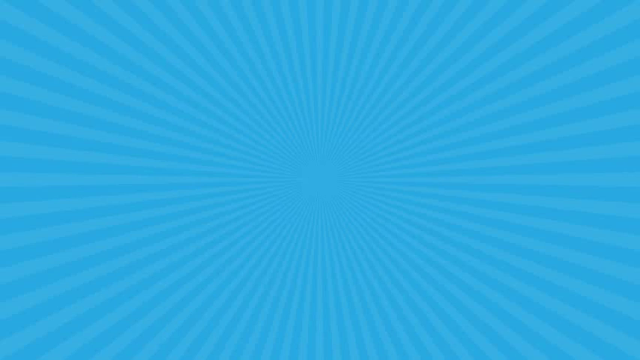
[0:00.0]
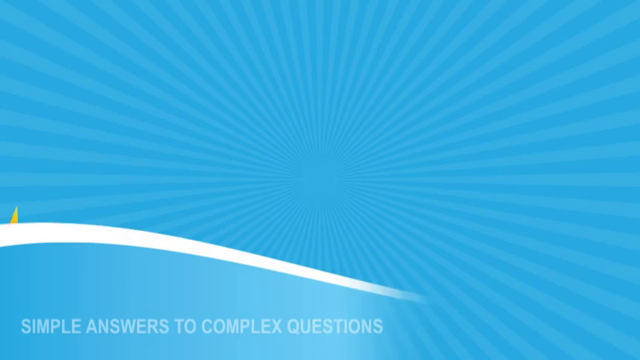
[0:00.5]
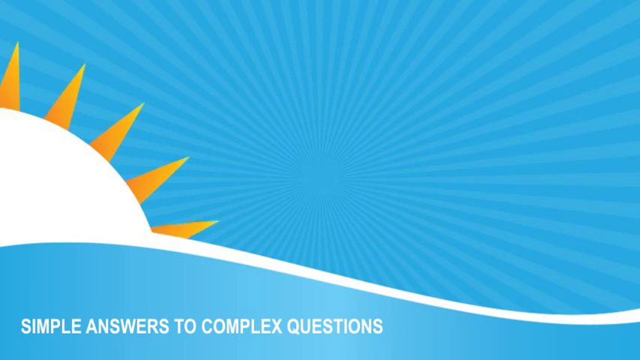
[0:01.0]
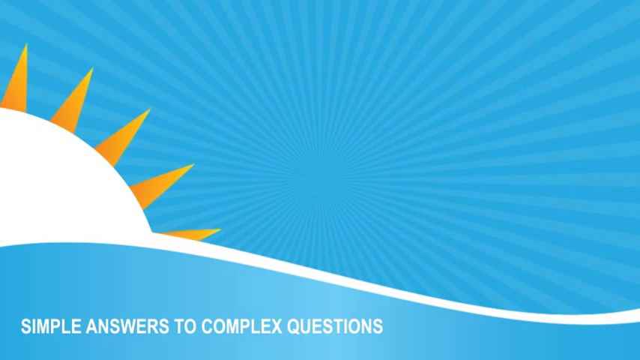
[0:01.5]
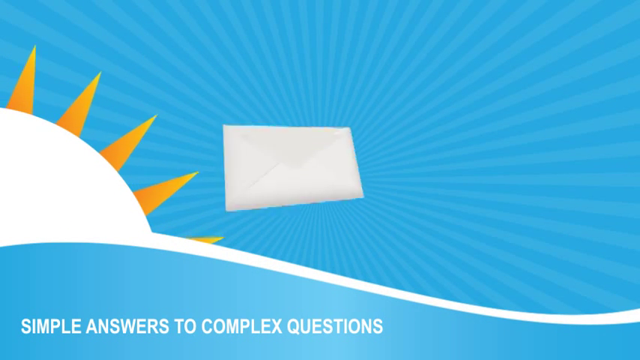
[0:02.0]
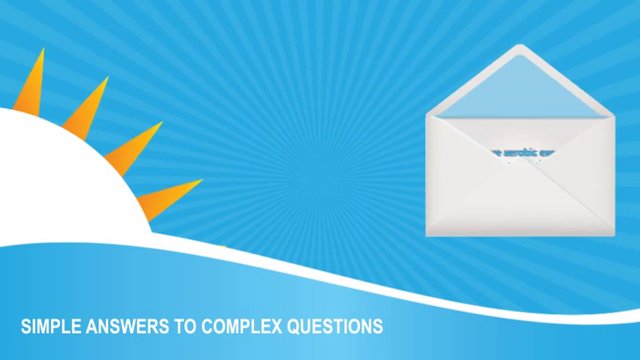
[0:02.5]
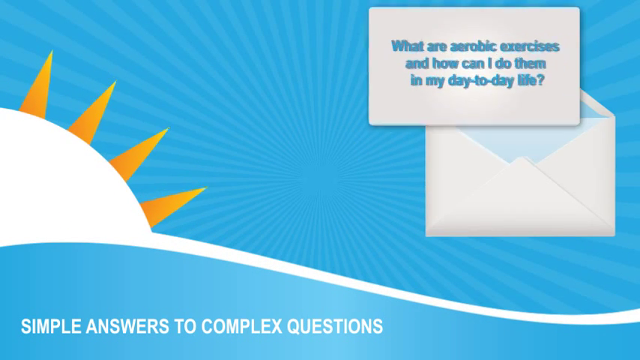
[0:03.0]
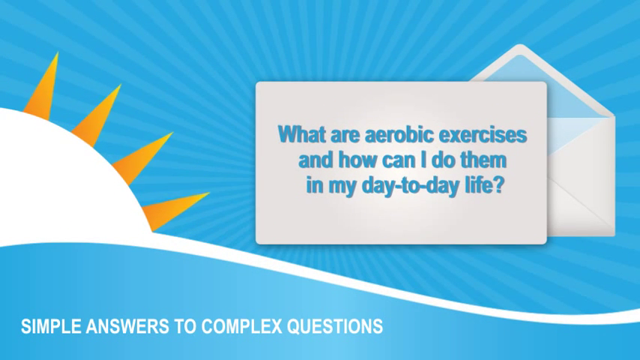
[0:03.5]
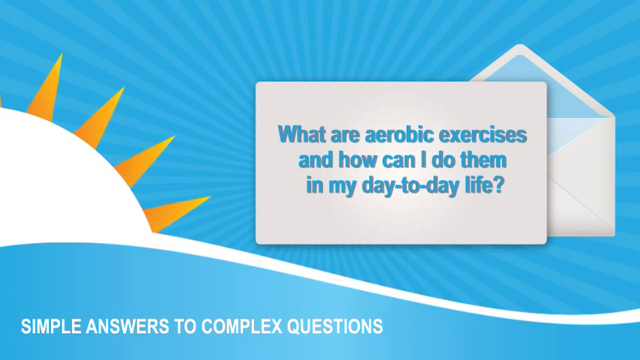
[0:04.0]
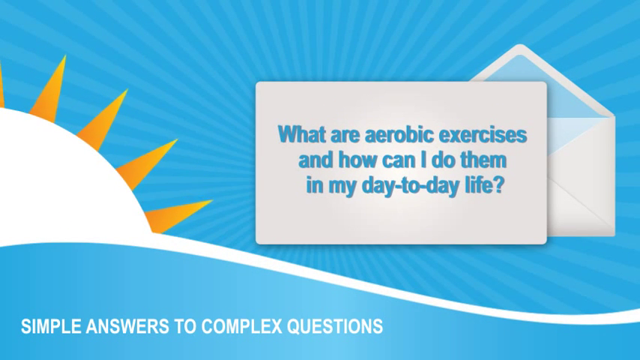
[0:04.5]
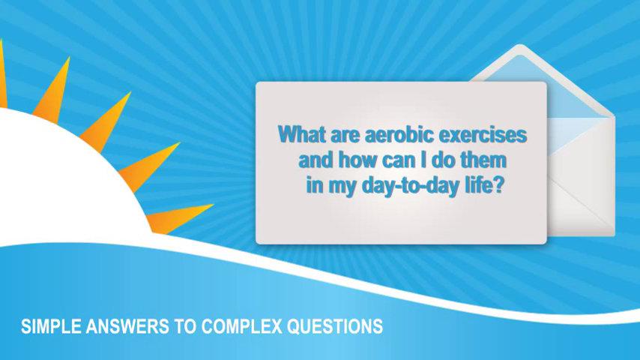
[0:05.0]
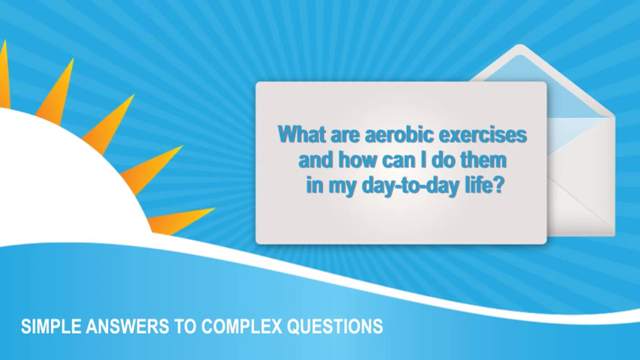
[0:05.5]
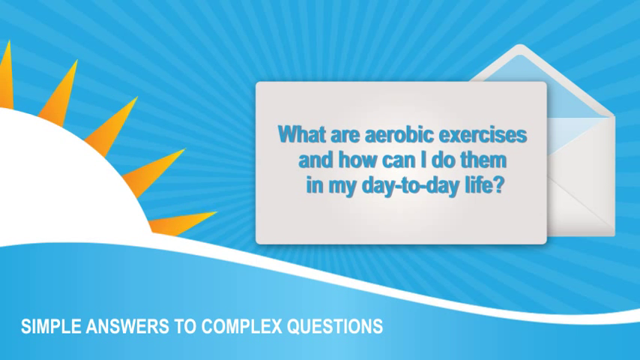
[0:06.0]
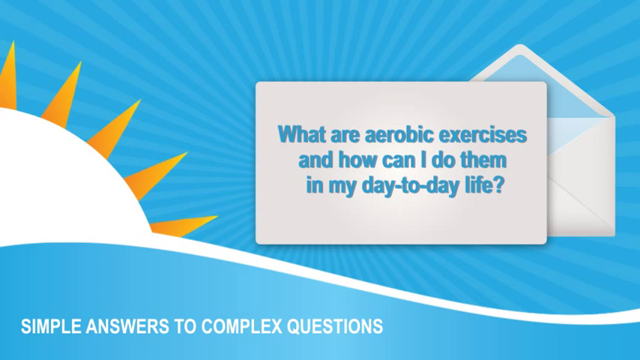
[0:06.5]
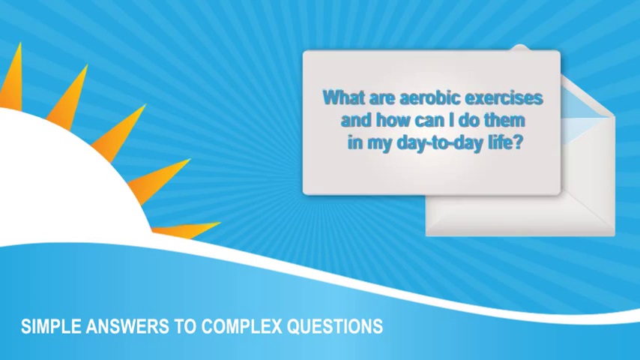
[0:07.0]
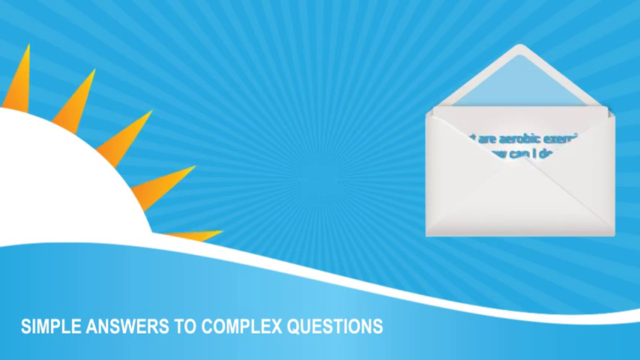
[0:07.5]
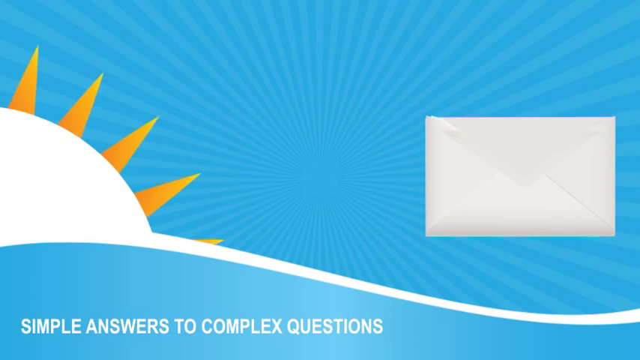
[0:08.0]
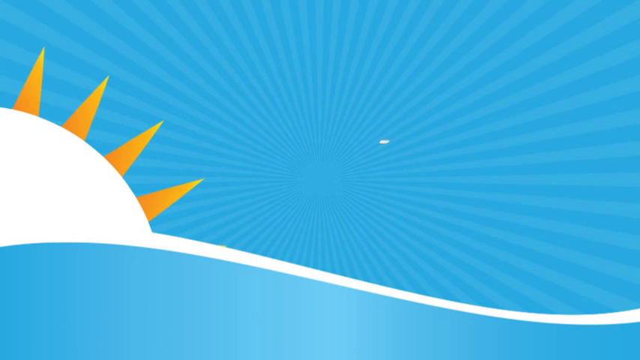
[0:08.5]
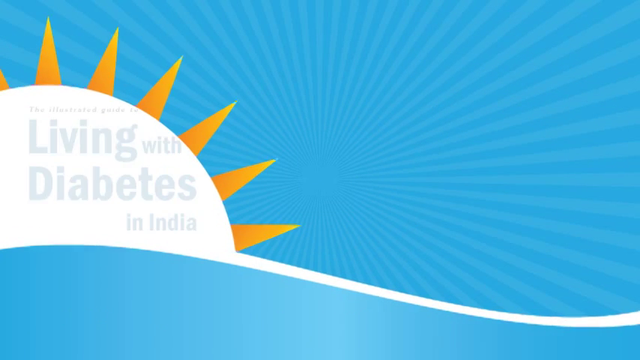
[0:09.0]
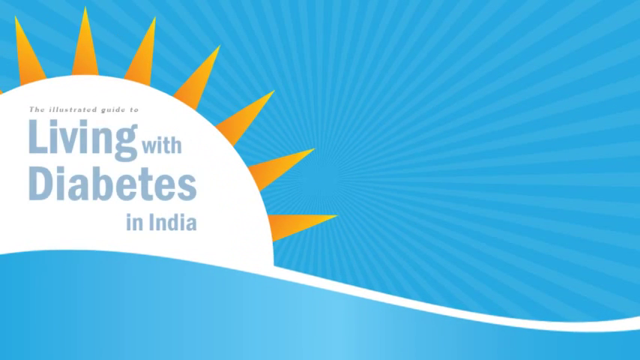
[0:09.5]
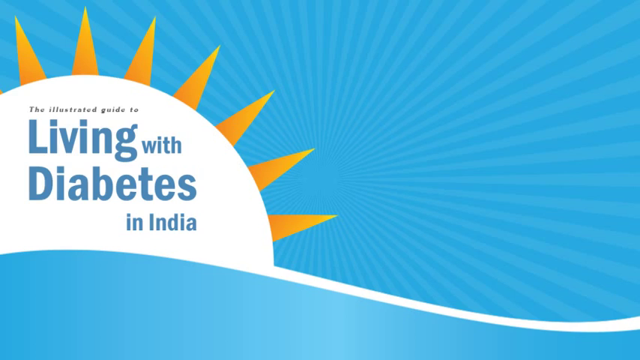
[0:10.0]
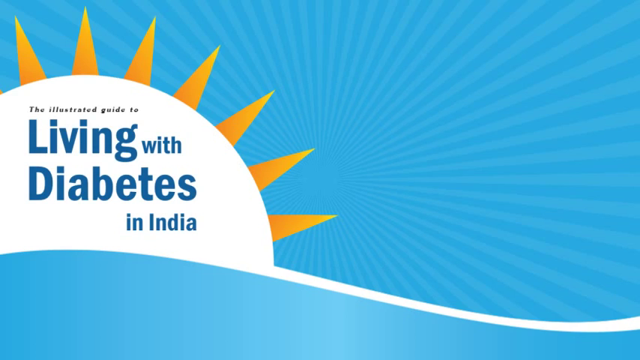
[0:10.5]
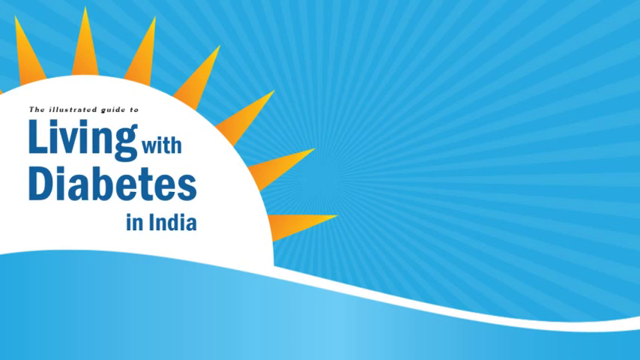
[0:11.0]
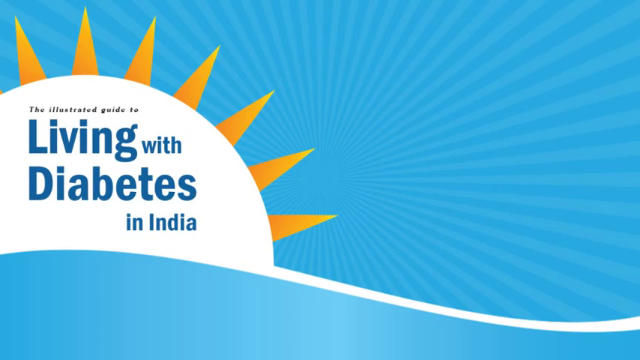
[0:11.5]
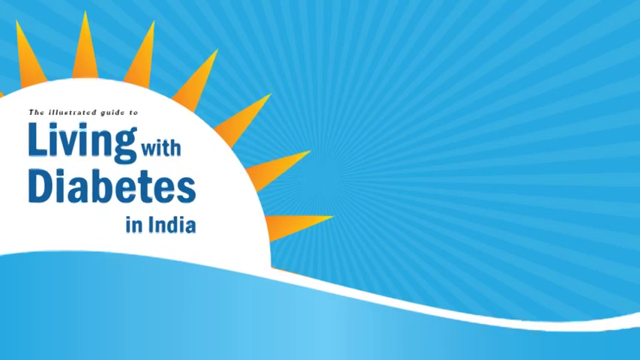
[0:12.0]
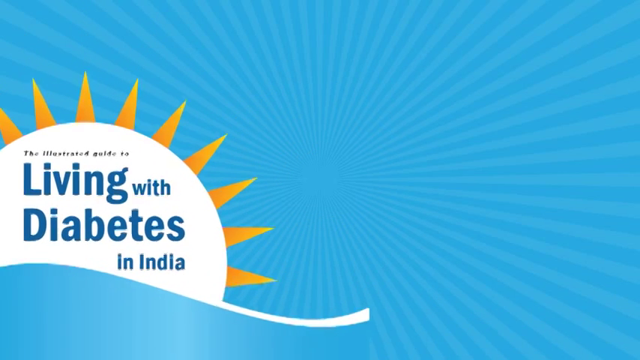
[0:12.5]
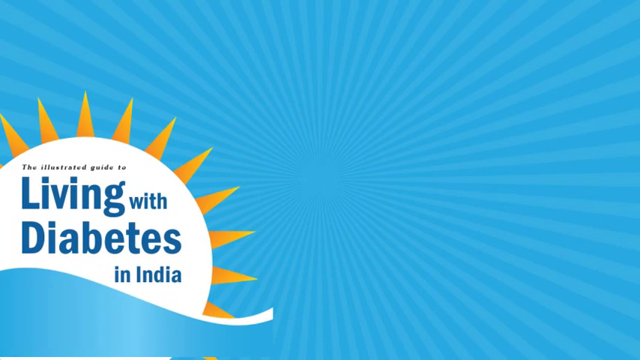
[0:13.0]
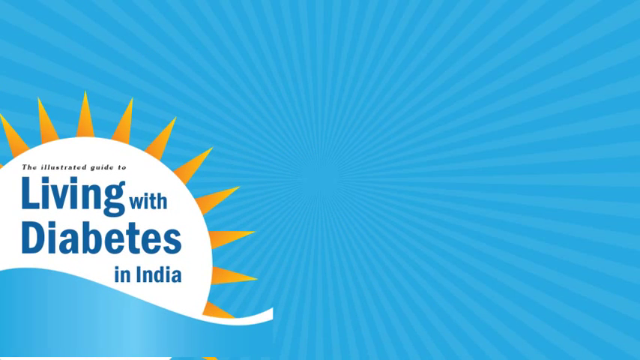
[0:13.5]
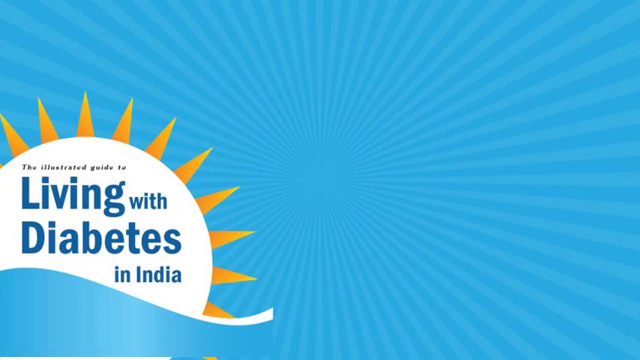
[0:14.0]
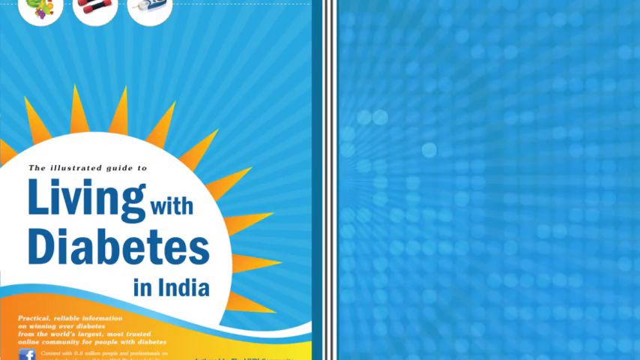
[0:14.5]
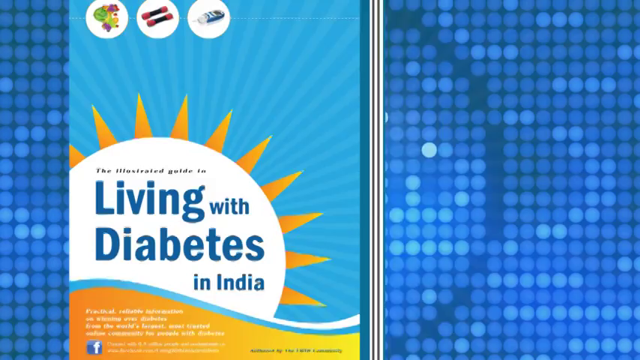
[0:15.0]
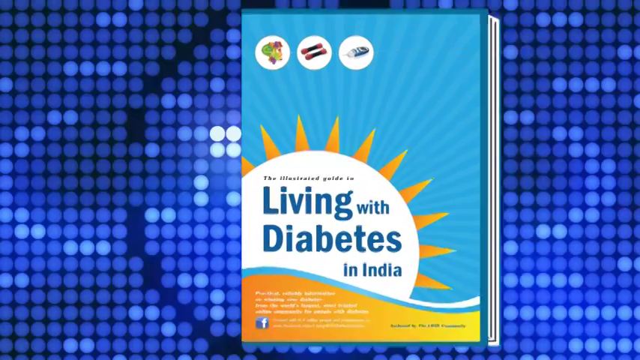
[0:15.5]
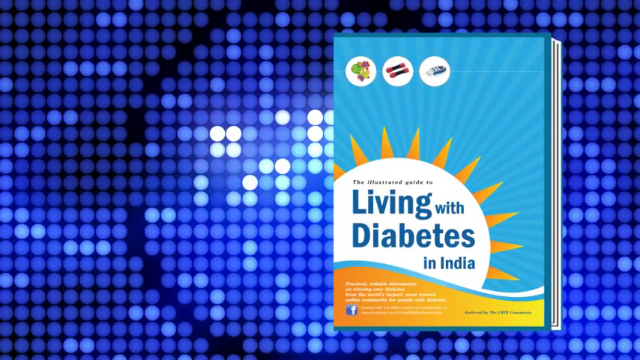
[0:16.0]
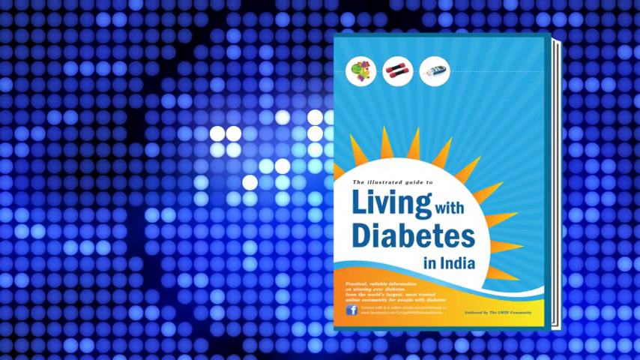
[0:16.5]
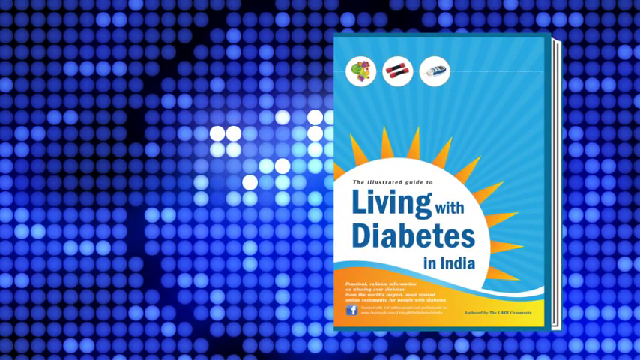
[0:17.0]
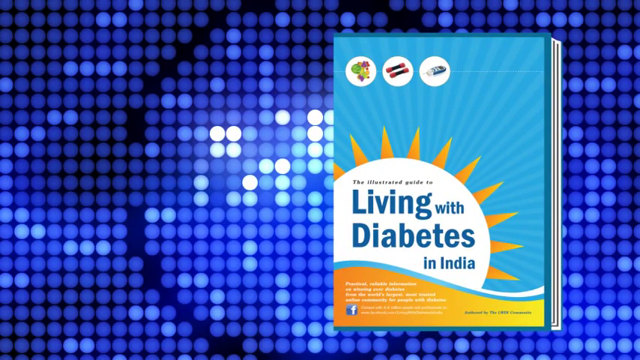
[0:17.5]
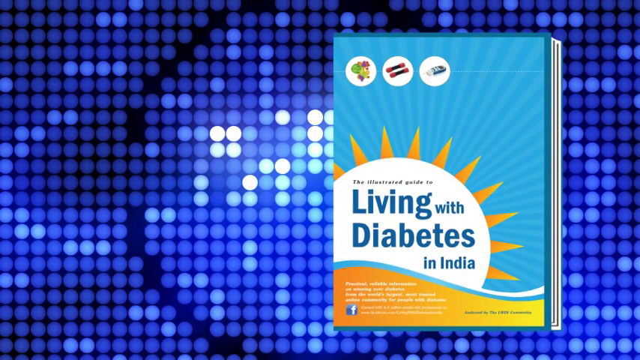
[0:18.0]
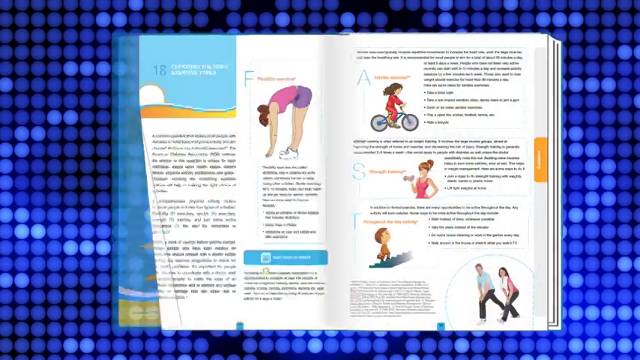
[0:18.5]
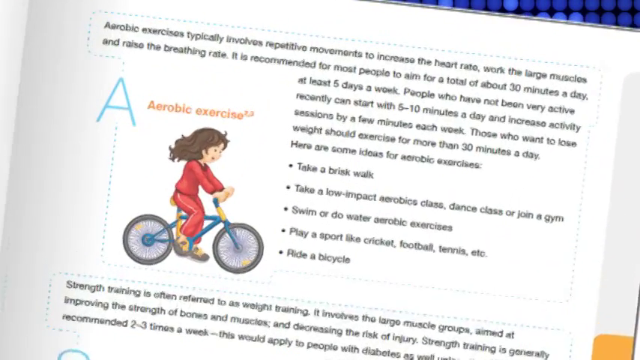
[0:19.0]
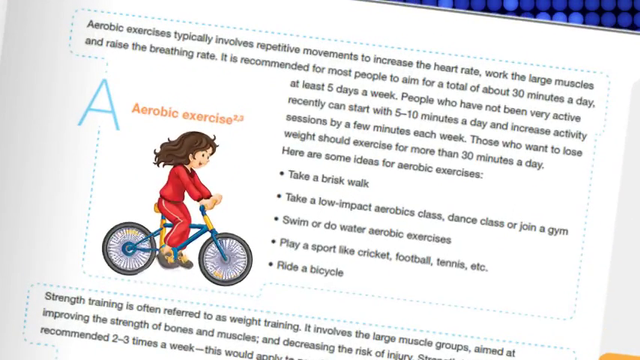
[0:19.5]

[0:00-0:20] On-screen text reads "simple answers to complex questions" and "what are anaerobic exercises and how can I do them in my day-to-day life?" The scene is a computer animation with a blue sky and a sun on the left. An envelope opens up and a card pops out, and on it, in blue, is the question "what are anaerobic exercises and how can I do them in my day-to-day life?" The sun on the left is a white circle with orange rays coming out of it, and on it is the text "the illustrated guide to living with diabetes in India", apparently the title of the whole video. The title then moves over to the right, turns into the title of a book, and the book opens up, all in animation.